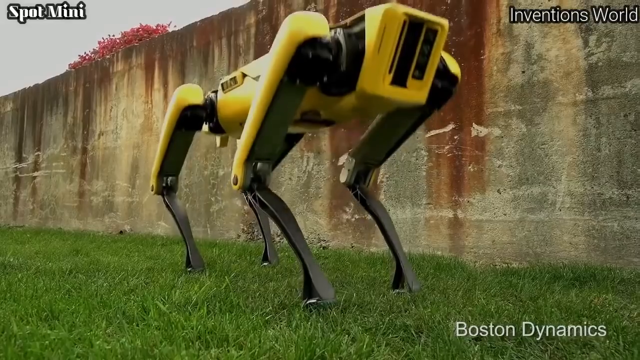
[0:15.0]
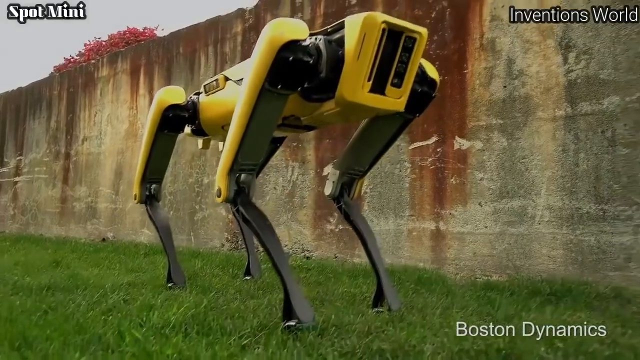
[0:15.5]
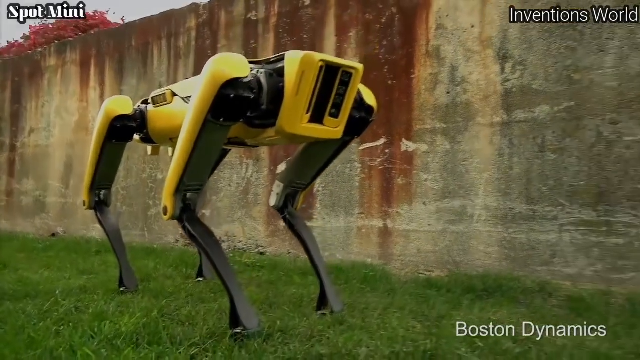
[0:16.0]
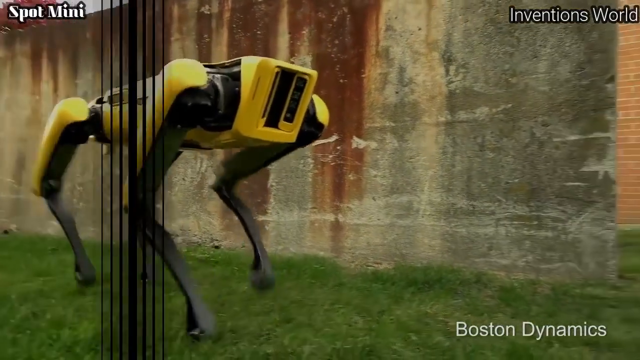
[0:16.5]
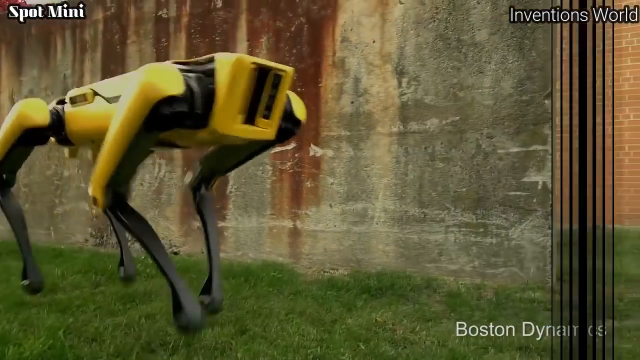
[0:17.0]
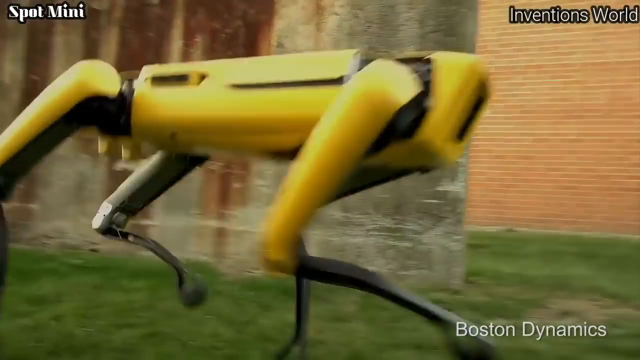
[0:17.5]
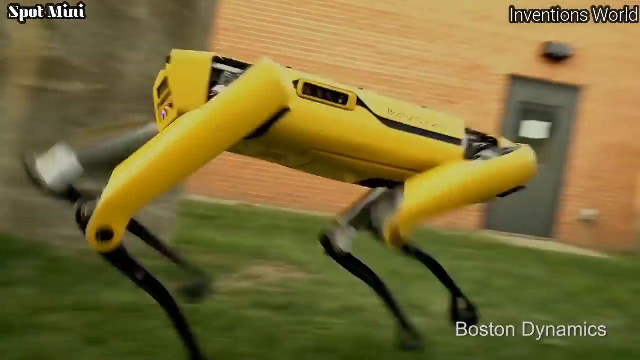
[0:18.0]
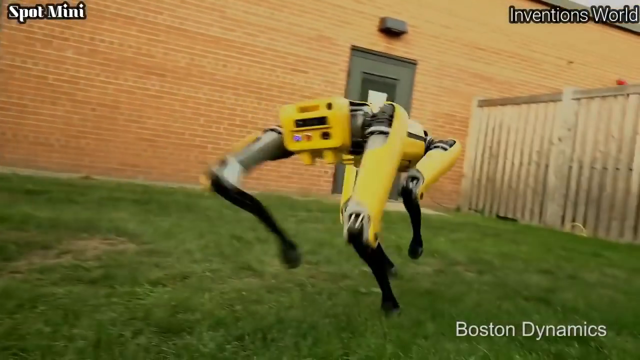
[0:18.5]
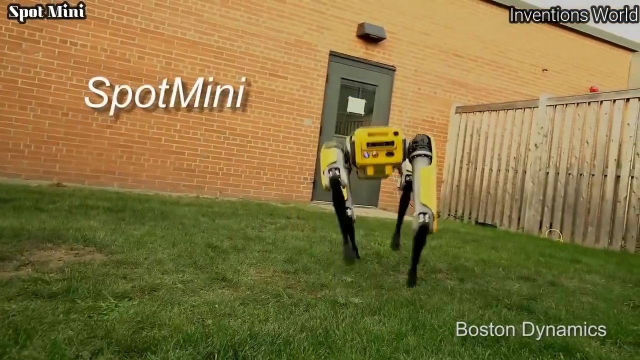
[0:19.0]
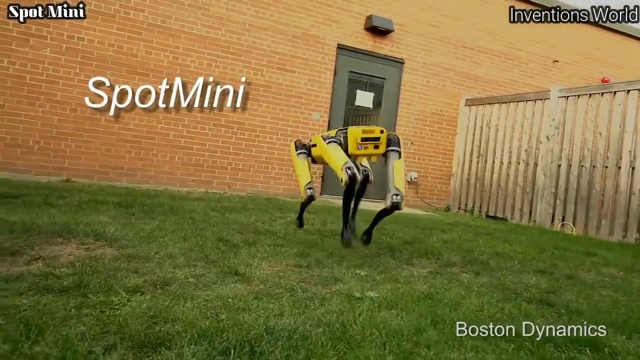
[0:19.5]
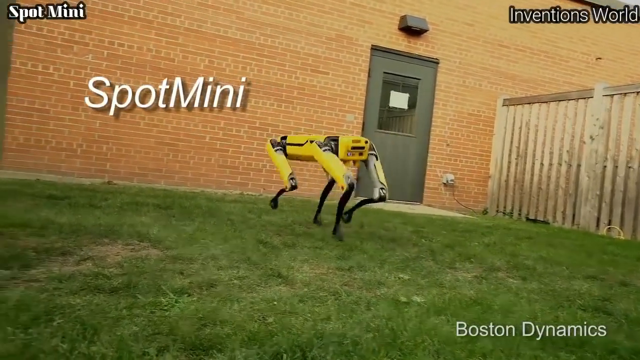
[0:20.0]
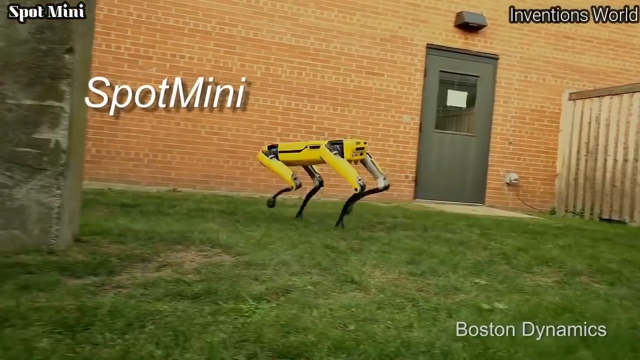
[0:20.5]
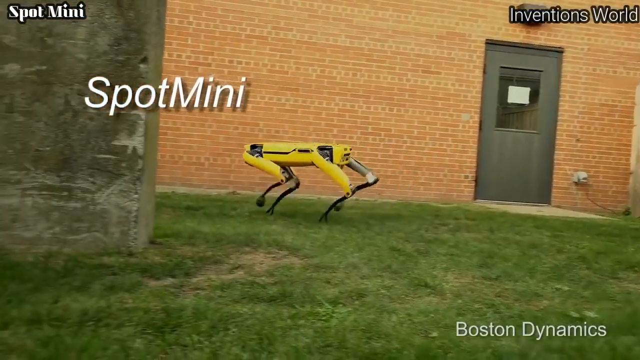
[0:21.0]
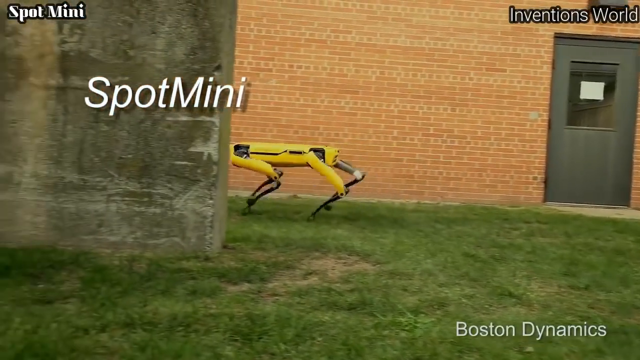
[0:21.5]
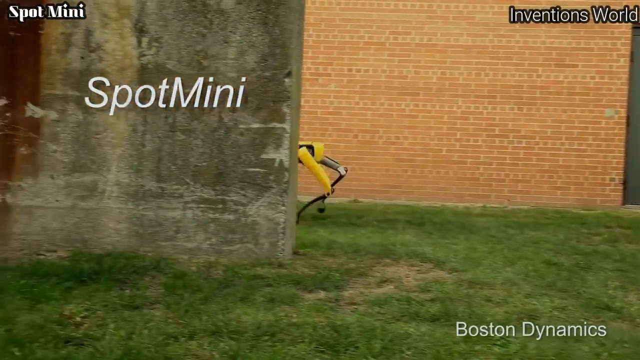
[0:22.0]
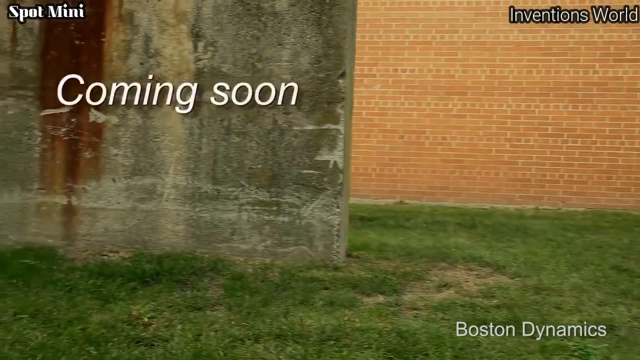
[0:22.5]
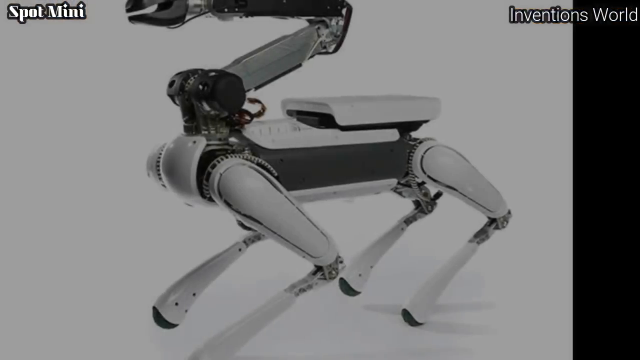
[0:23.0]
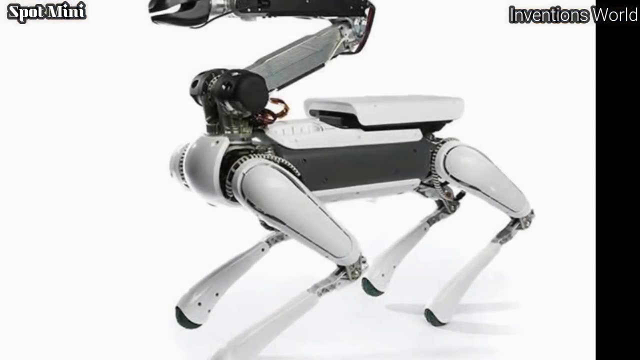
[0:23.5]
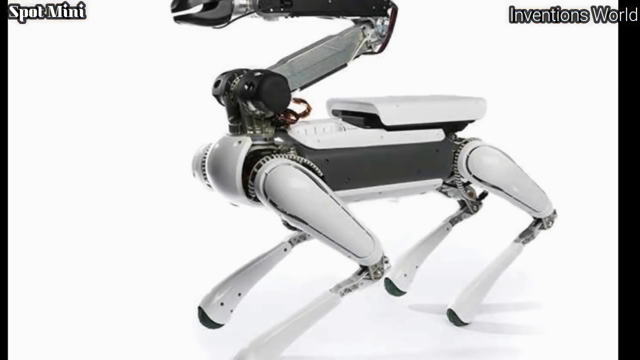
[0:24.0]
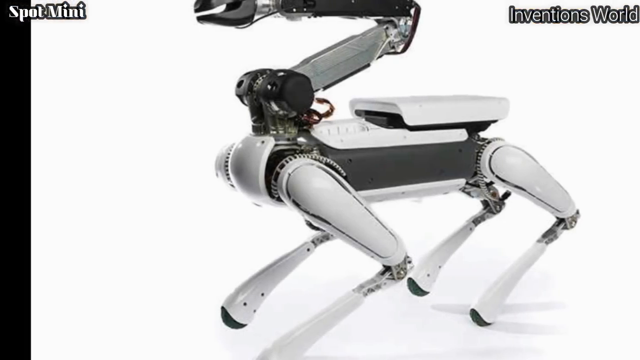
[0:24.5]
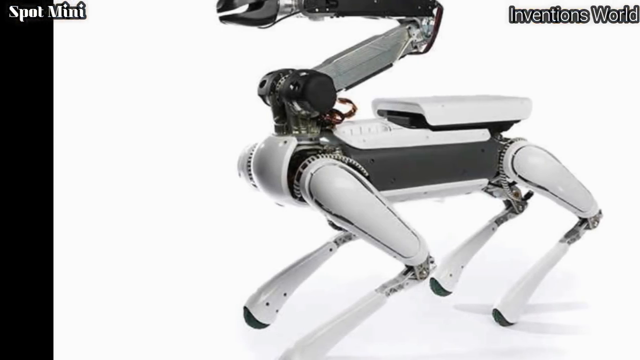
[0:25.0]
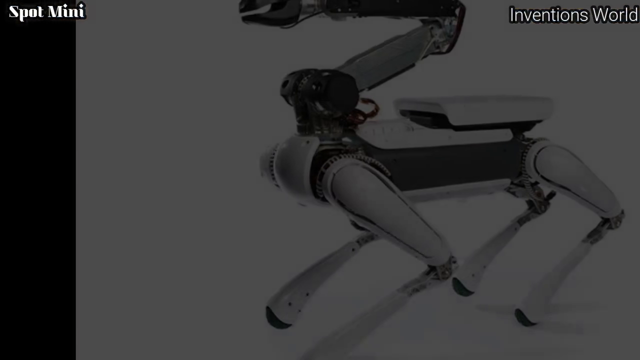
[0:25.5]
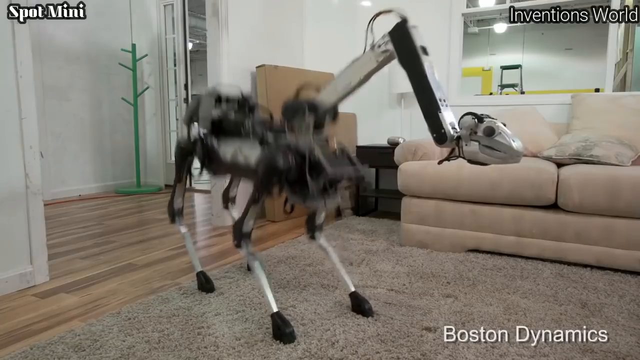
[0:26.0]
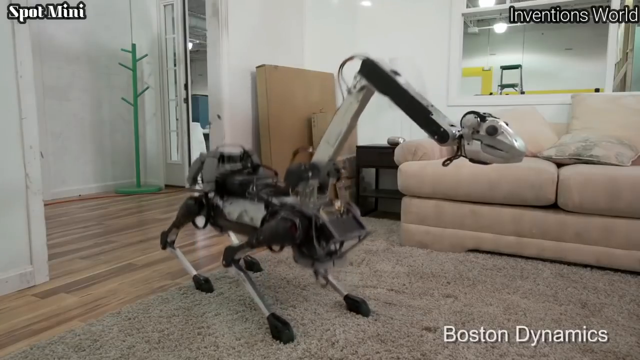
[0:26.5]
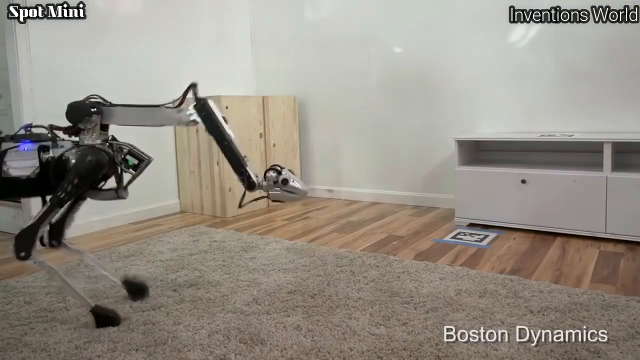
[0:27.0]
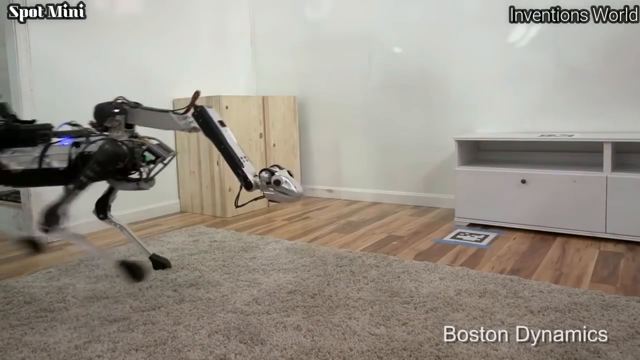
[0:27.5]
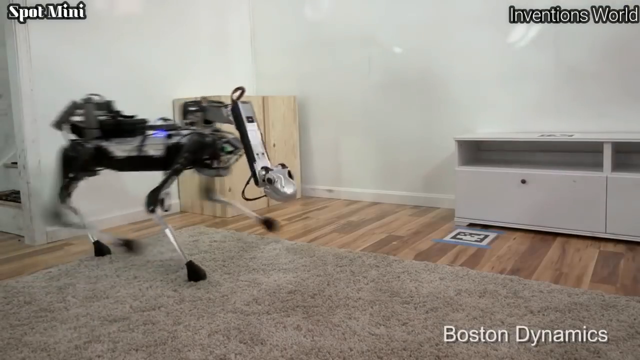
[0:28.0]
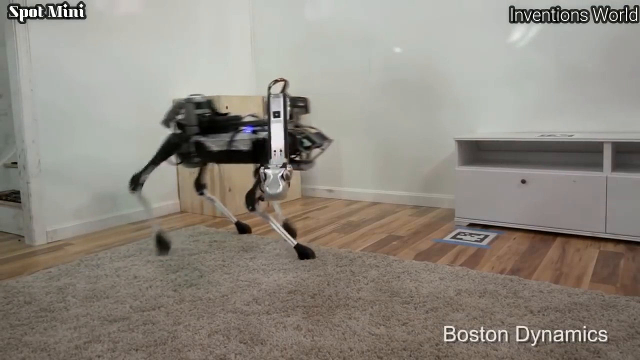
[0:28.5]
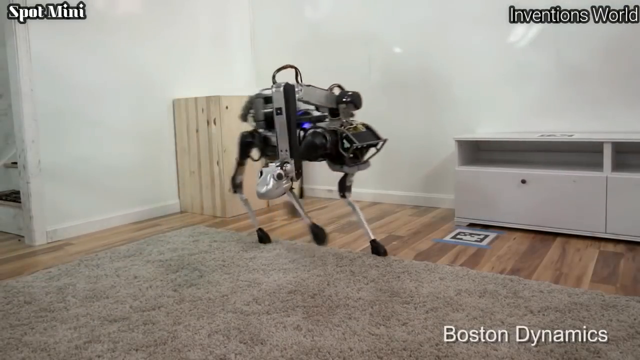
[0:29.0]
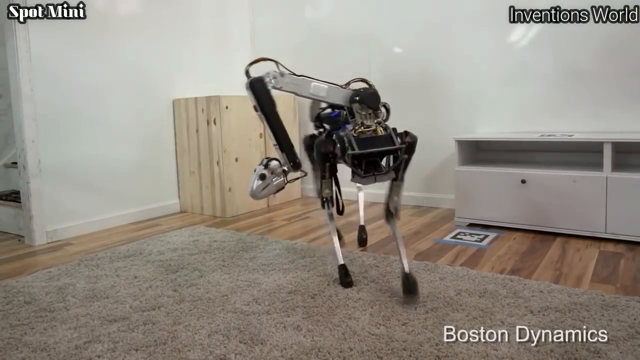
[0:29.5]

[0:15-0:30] The little yellow robot dog kind of prances excitedly before running off to the right, and the camera follows it. In the background is a red brick wall on a full building with a door. The video moves to a small picture of a new robot with a longer neck and a kind of snake-face-looking thing where its head should be. It then moves to a room in a house with white walls, a wood floor, a gray rug on the floor, and some drawers in the background. The same snake-headed robot prances around in a circle, its body swinging and pivoting around its head, which kind of keeps its eyes in the same direction and area.